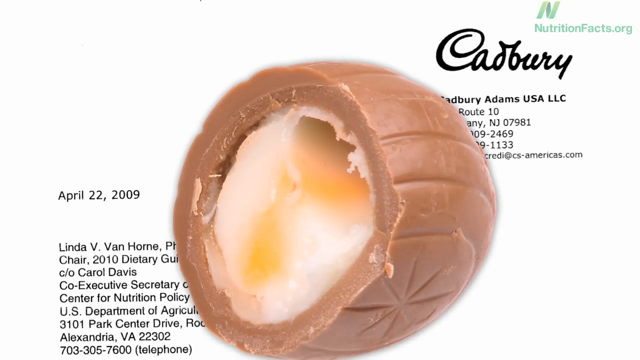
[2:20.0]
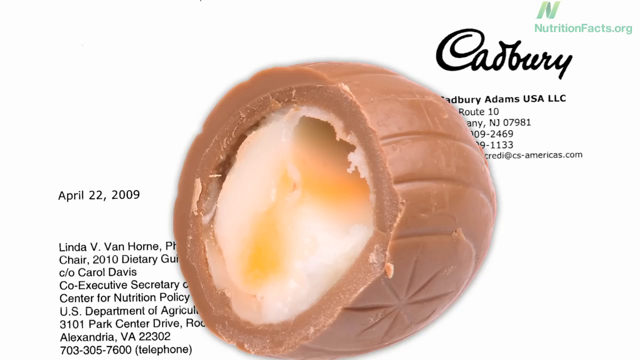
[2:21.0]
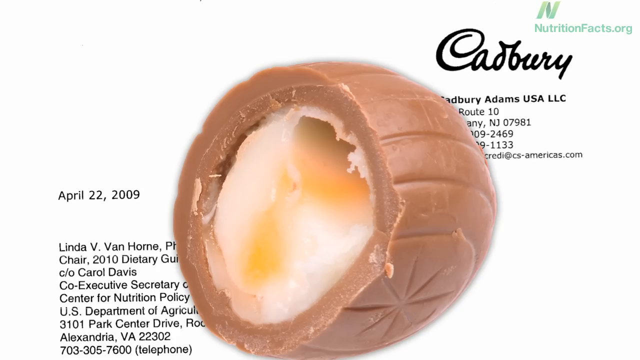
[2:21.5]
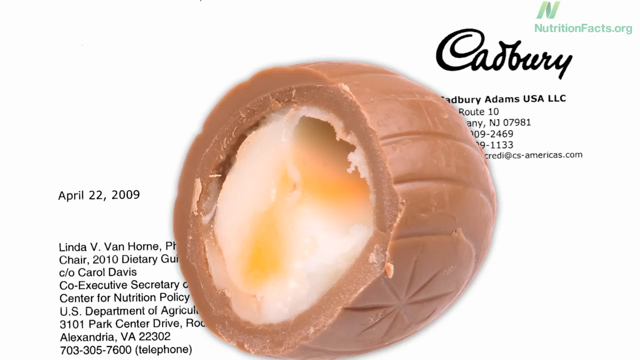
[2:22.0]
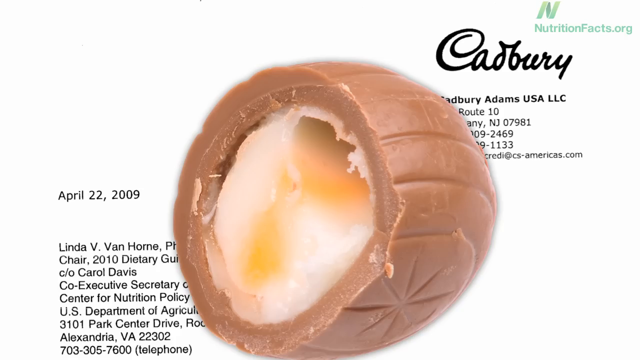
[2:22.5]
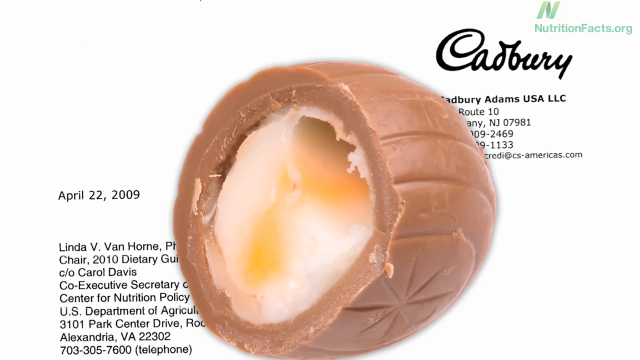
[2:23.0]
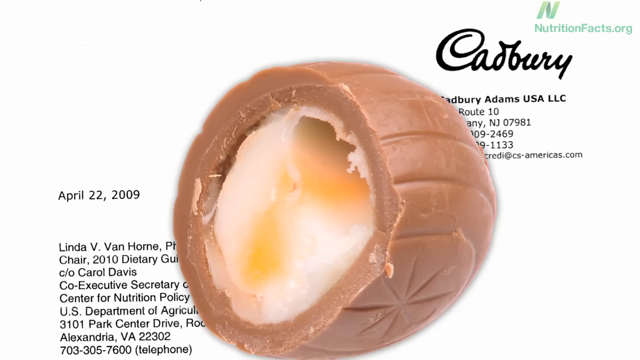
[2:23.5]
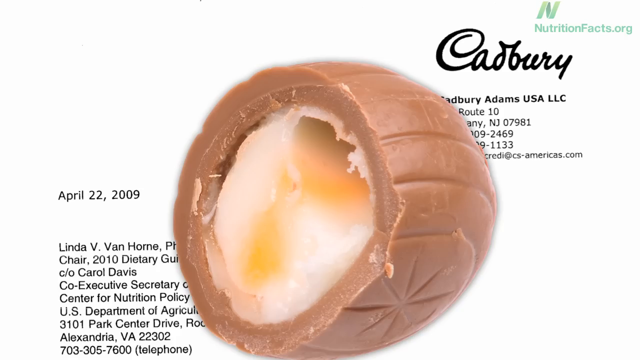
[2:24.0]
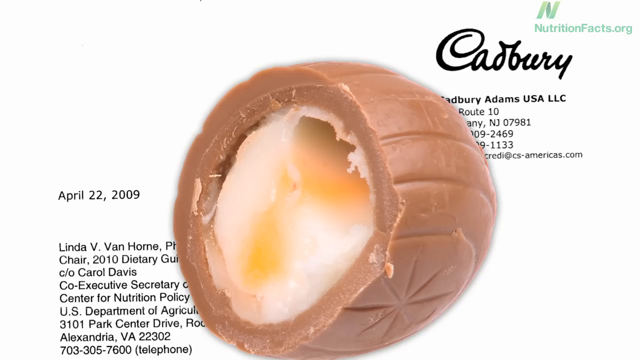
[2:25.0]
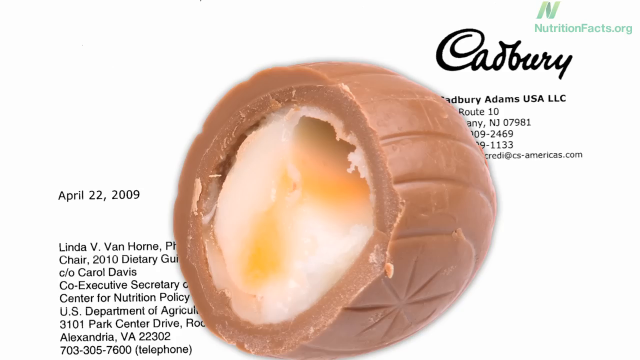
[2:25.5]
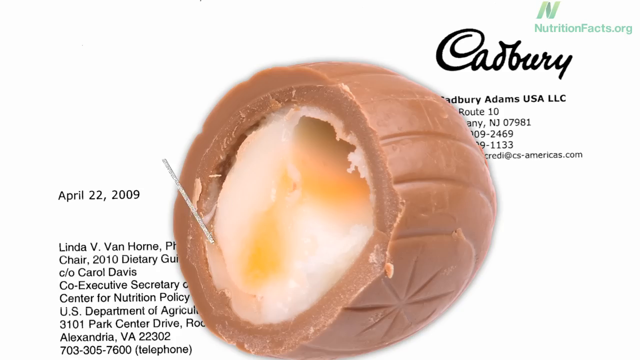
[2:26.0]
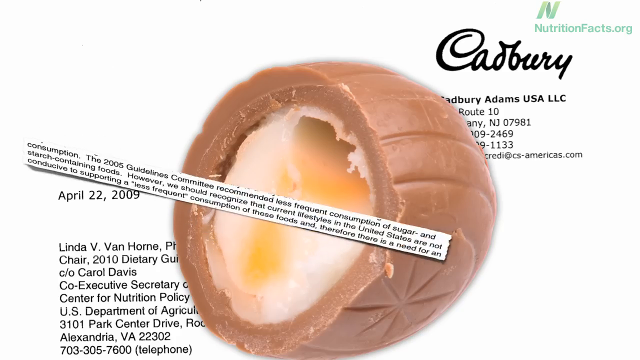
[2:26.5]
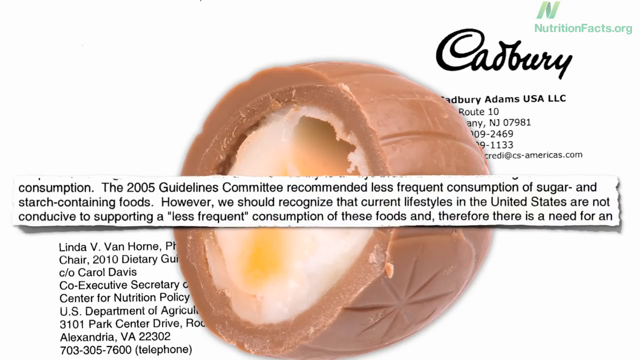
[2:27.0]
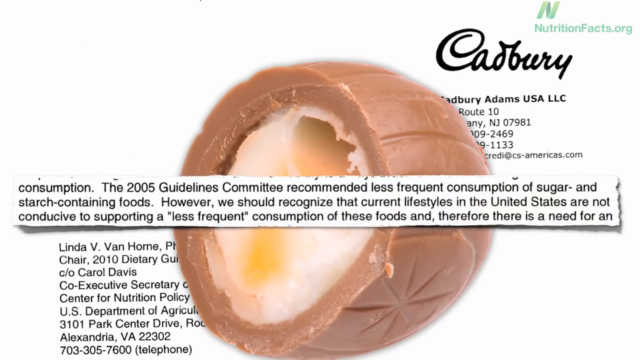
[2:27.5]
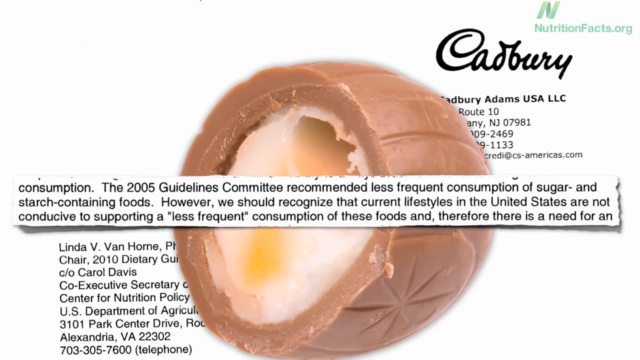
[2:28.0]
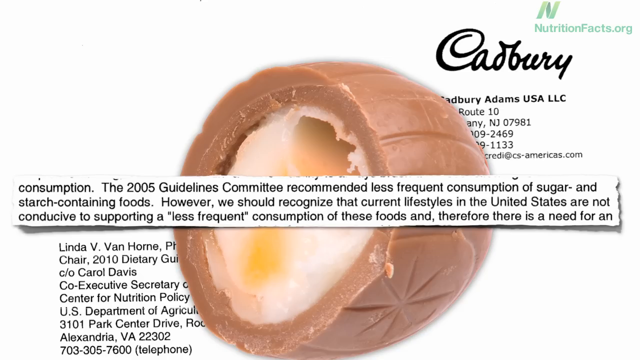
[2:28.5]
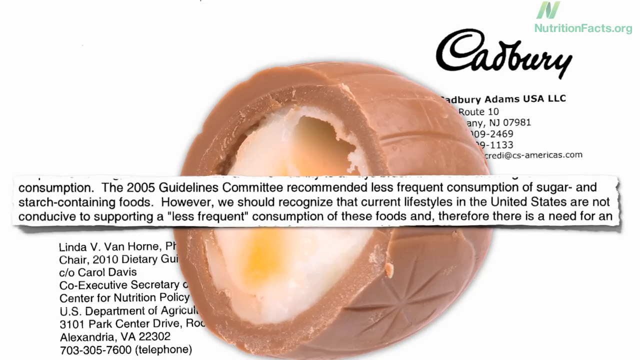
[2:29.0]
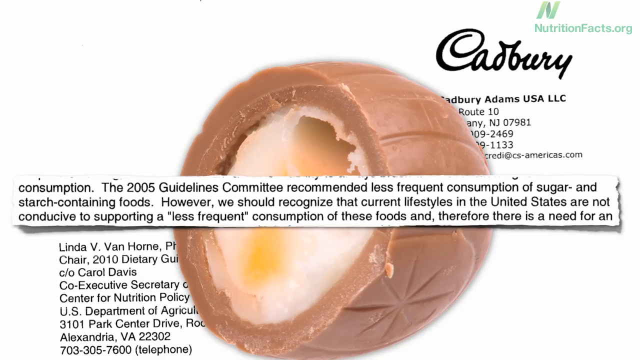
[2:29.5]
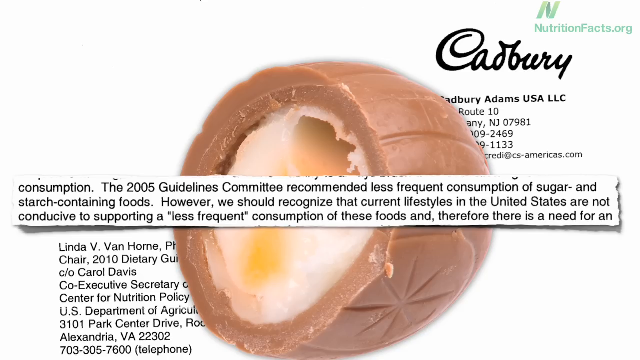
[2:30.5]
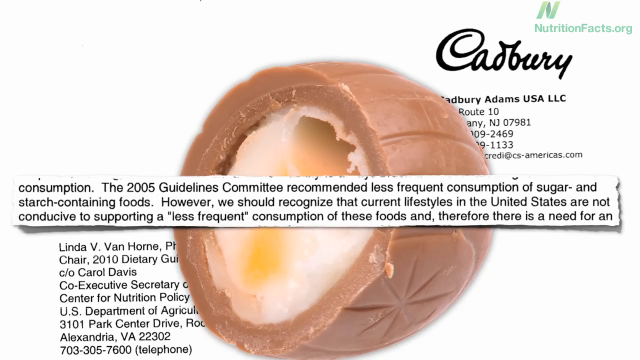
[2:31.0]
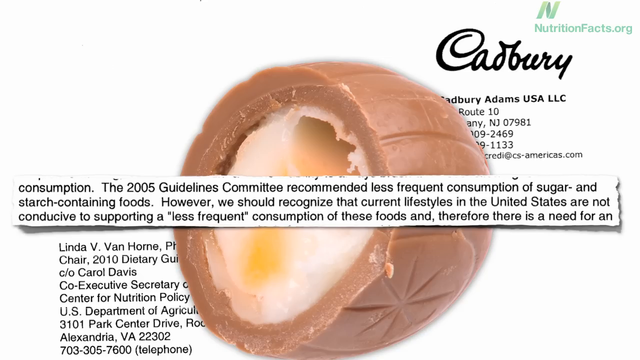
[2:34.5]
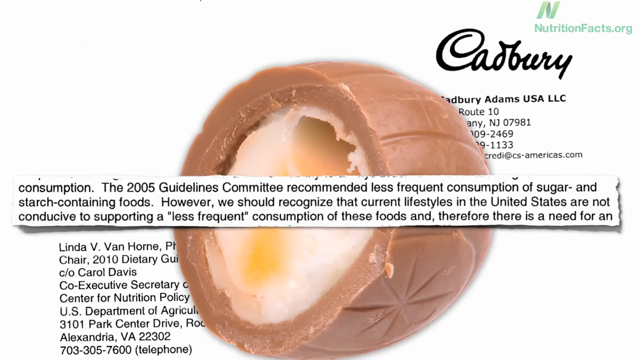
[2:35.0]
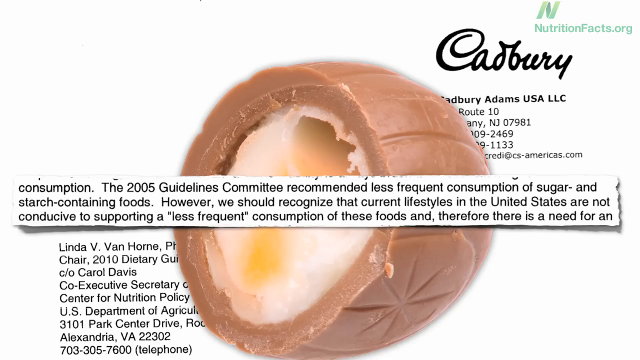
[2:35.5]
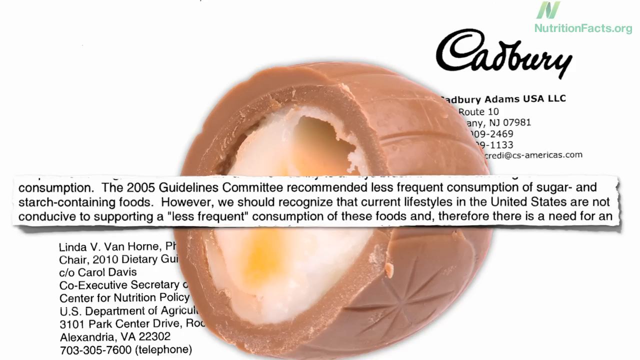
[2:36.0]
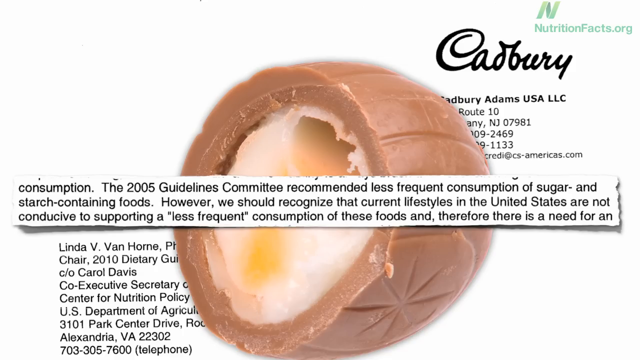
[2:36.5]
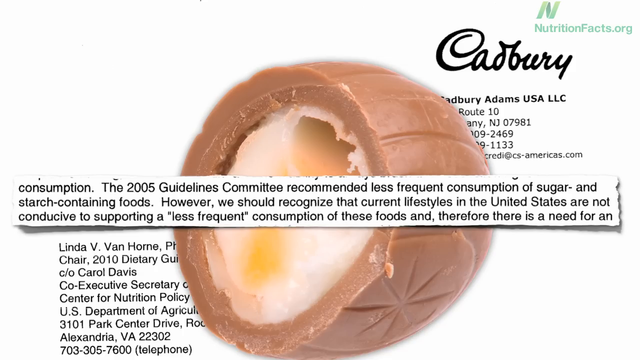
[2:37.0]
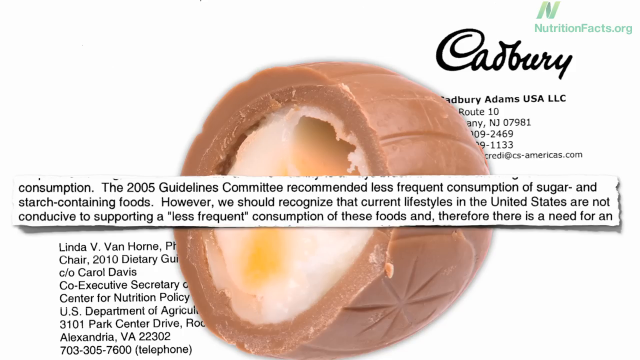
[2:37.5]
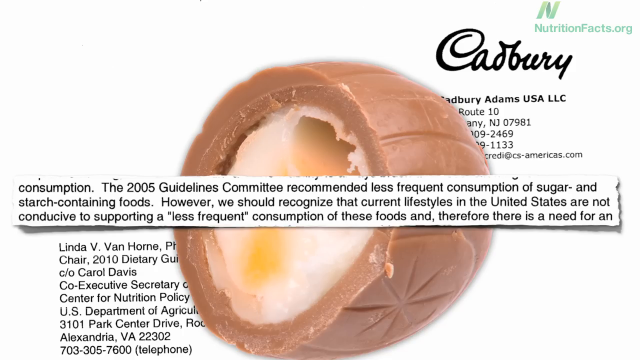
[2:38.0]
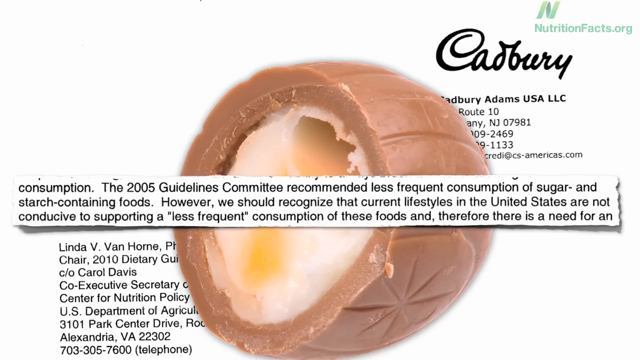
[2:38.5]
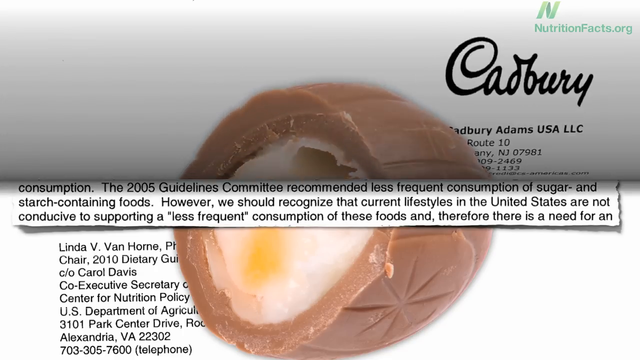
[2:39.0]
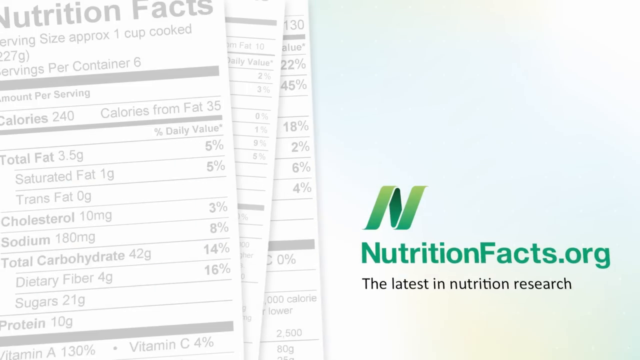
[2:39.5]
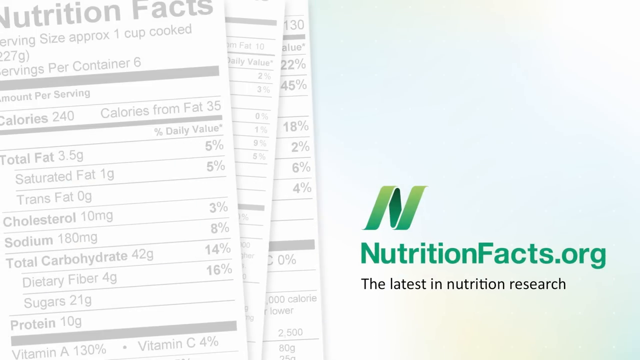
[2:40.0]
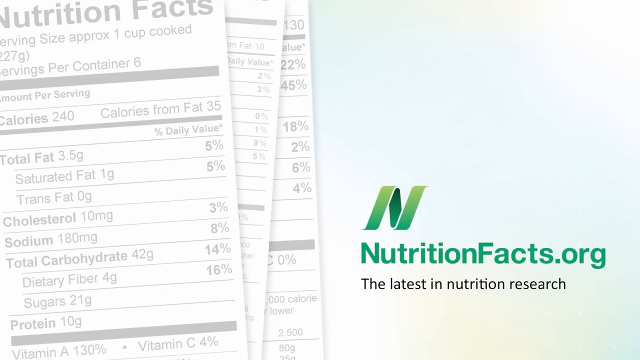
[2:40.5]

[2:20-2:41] The cut-open Cadbury cream egg sits on the screen as more text pops up and overlays the whole image, reading "consumption, the 2005 guidelines committee recommended less frequent consumption of sugar and starch containing foods. However, we should recognize that current lifestyles in the United States are not conductive to supporting a less frequent consumption of these foods and therefore, there is a need for an". Half of the screen then turns dark and flips down, returning to the opening screen: three pictures of nutrition facts on the left side of the screen, kind of overlaying each other, and on the right "nutritionfacts.org" with a green N logo and "the latest in nutrition research" underneath. The video ends on this still image.